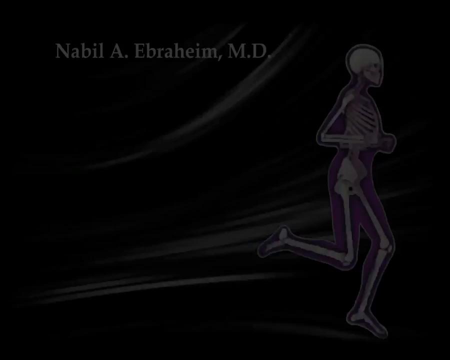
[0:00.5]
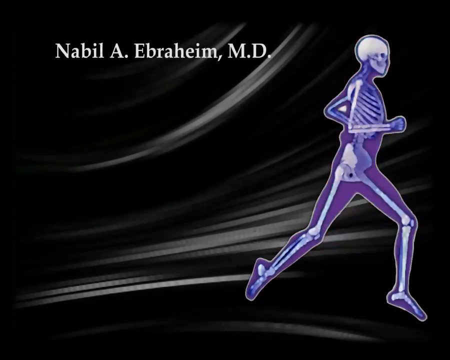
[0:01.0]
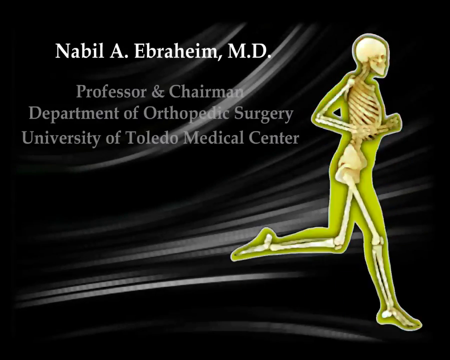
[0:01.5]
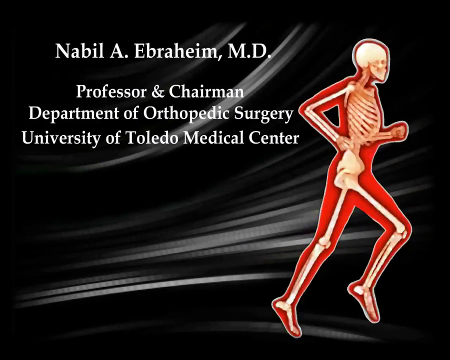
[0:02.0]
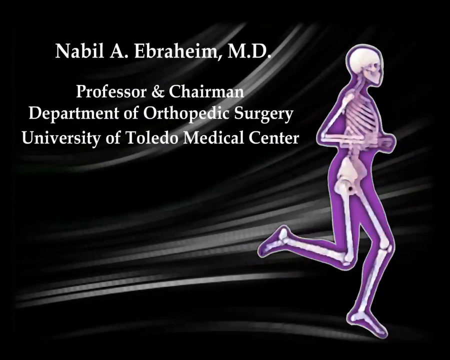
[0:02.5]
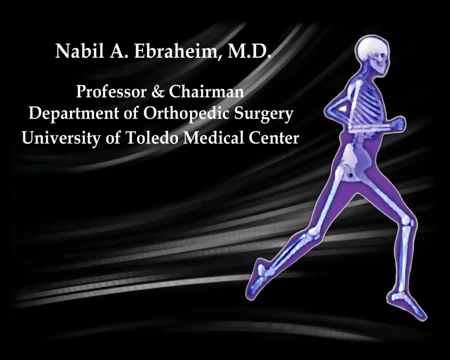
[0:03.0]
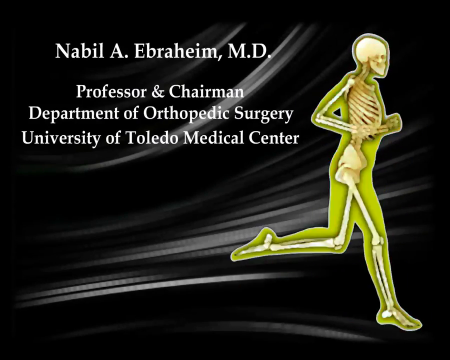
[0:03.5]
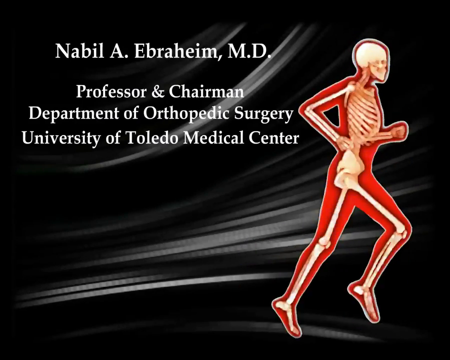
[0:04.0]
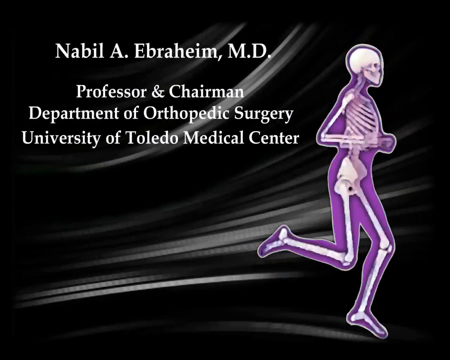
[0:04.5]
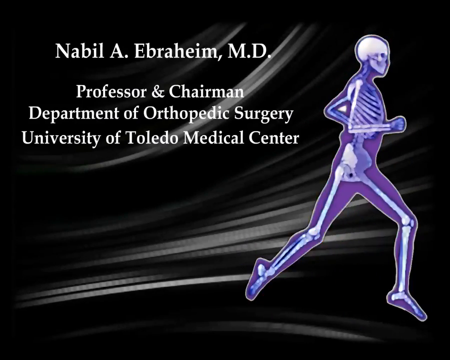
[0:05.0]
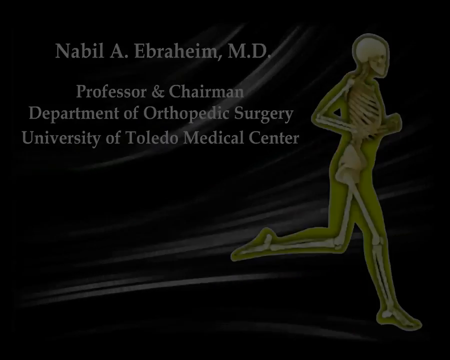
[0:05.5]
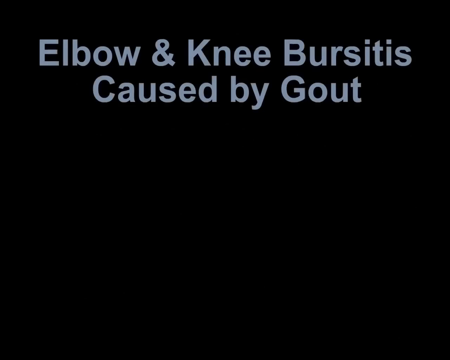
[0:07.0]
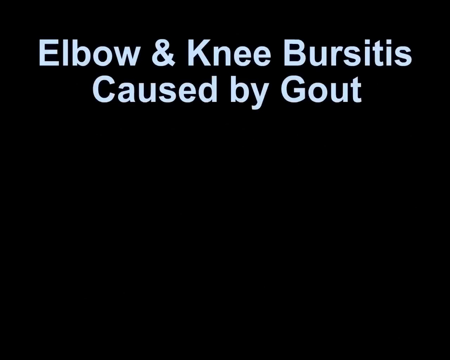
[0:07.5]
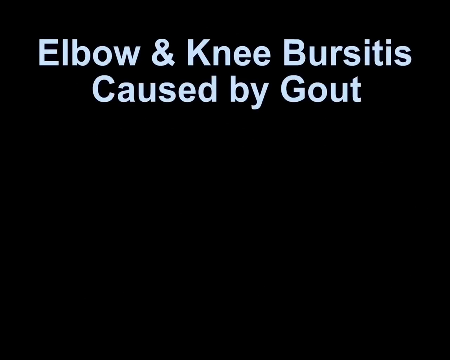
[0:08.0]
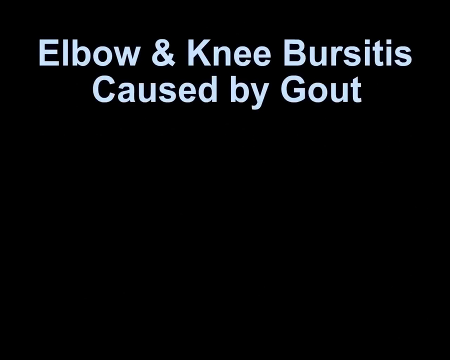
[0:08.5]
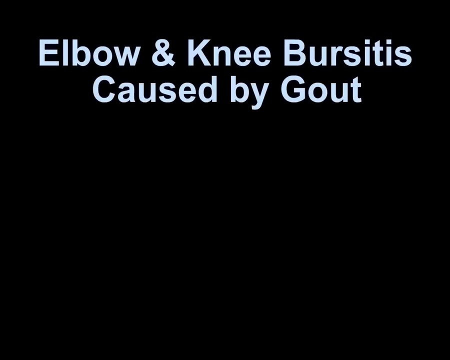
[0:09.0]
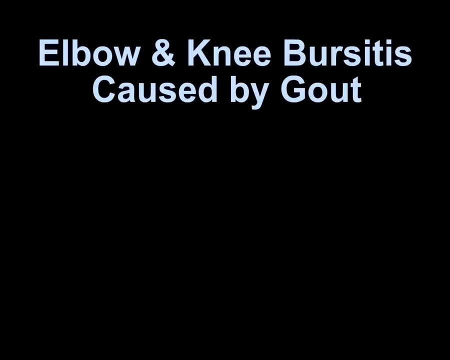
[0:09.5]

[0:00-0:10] The video opens on a black background with white and silver streaks on it. A skeleton appears running, flashing rainbow colors. To the left of the running skeleton, white writing reads "Nabil A Ebraheim MD professor and chairman department of orthopedic surgery University of Toledo medical". The scene then transitions to a new slide that reads "elbow and knee bursitis caused by gout". The screen is still black and the running skeleton is in white. The title then zooms away.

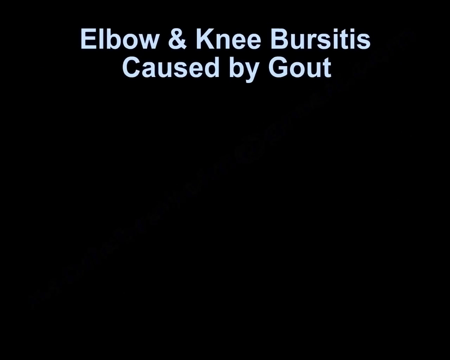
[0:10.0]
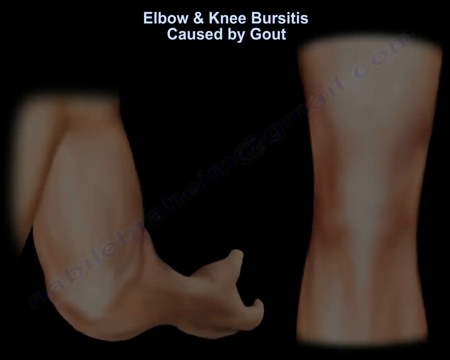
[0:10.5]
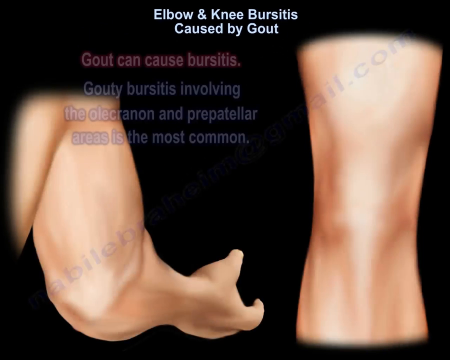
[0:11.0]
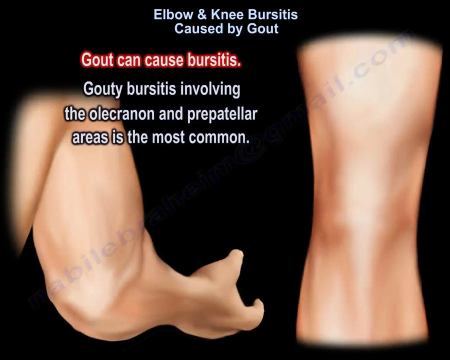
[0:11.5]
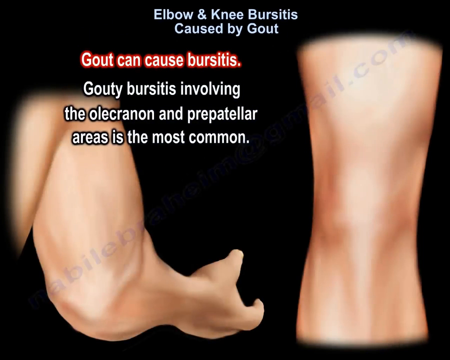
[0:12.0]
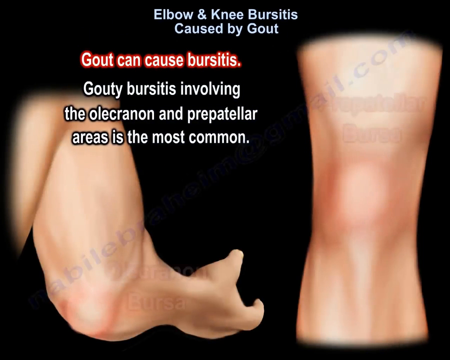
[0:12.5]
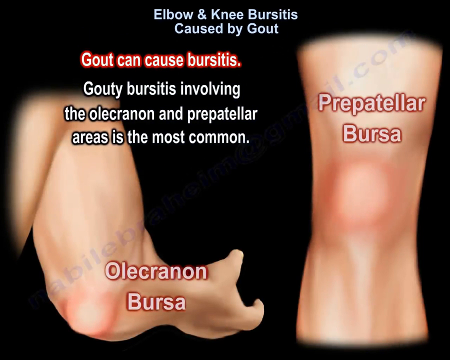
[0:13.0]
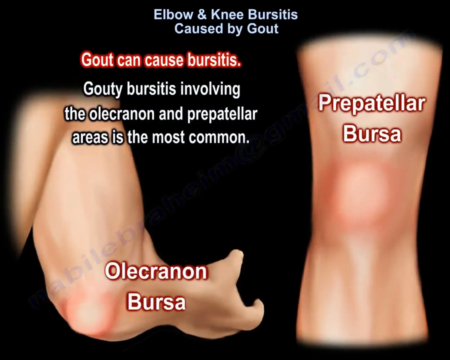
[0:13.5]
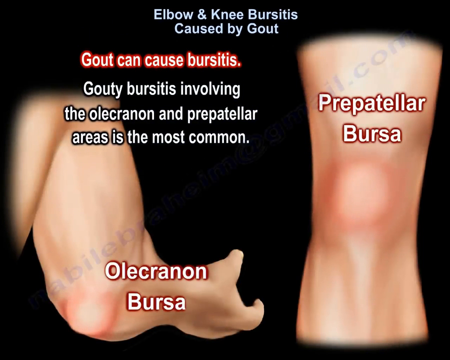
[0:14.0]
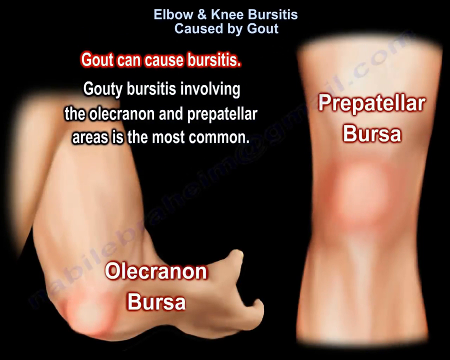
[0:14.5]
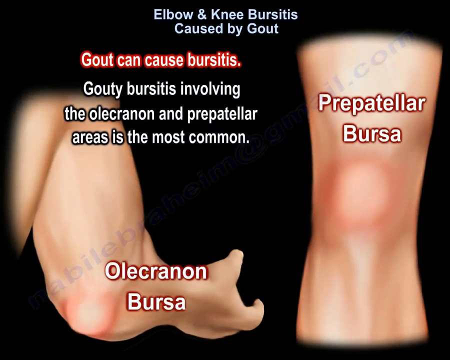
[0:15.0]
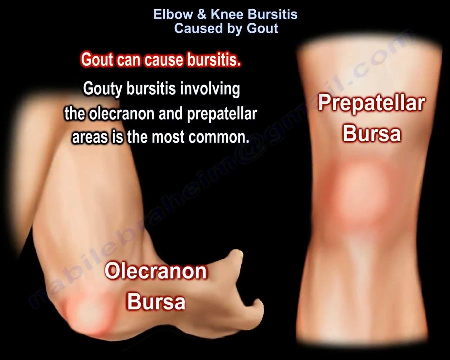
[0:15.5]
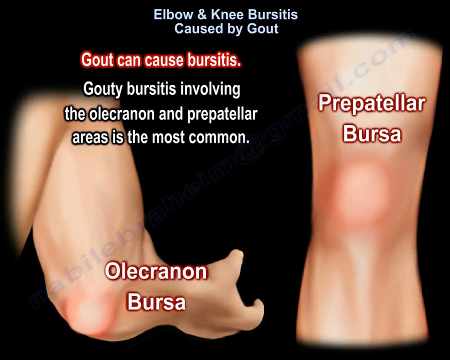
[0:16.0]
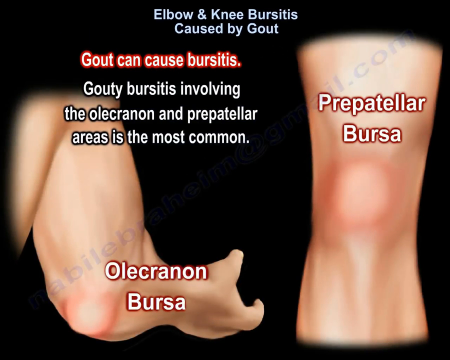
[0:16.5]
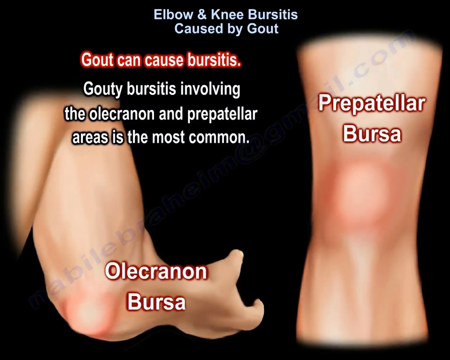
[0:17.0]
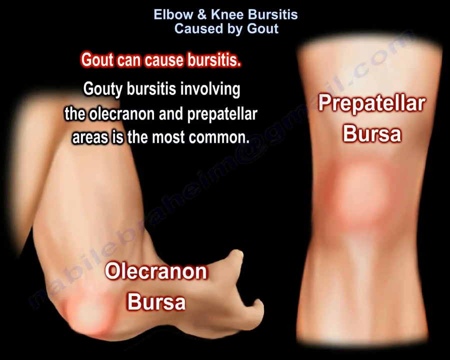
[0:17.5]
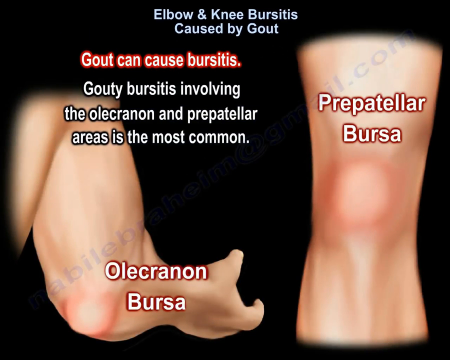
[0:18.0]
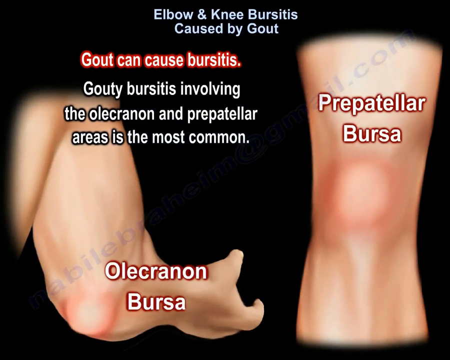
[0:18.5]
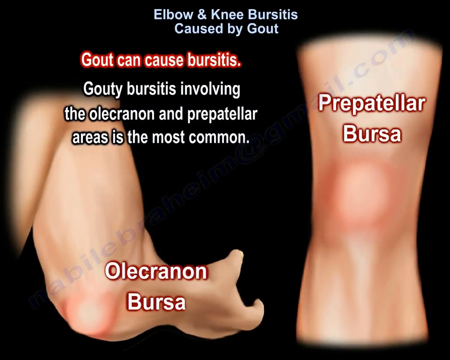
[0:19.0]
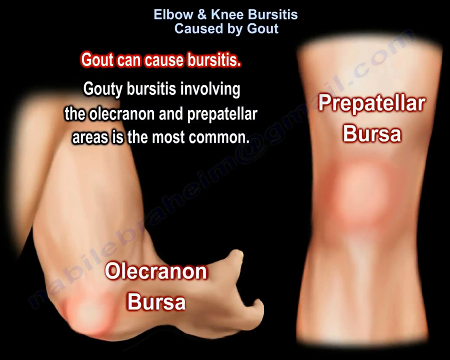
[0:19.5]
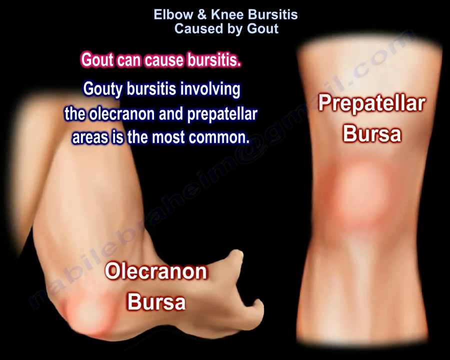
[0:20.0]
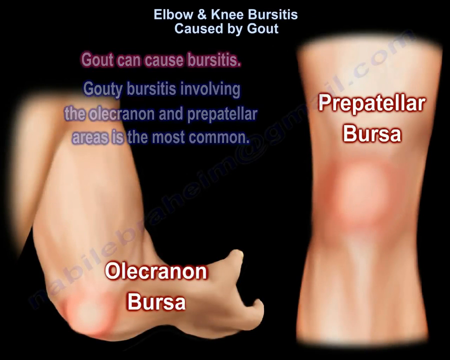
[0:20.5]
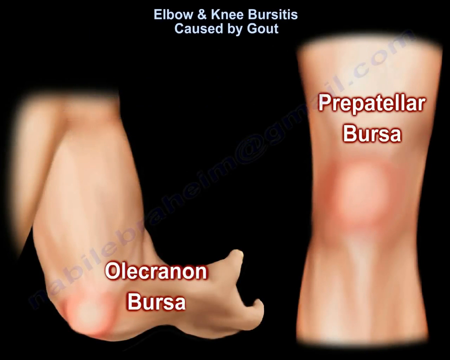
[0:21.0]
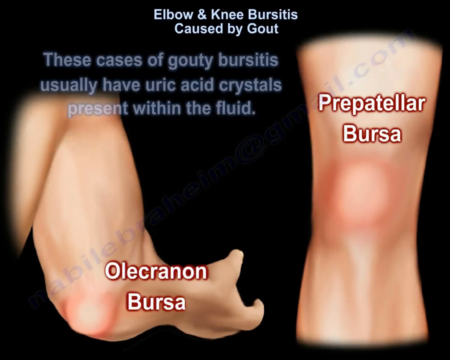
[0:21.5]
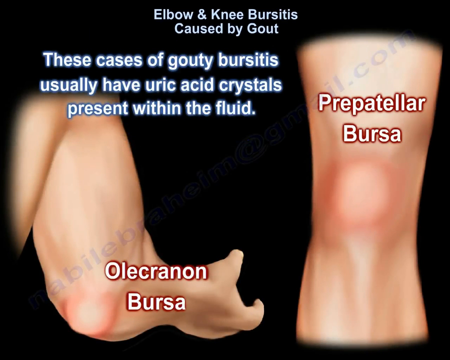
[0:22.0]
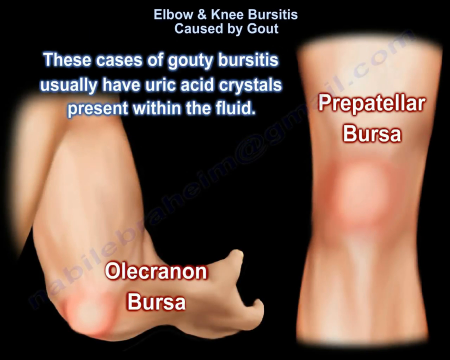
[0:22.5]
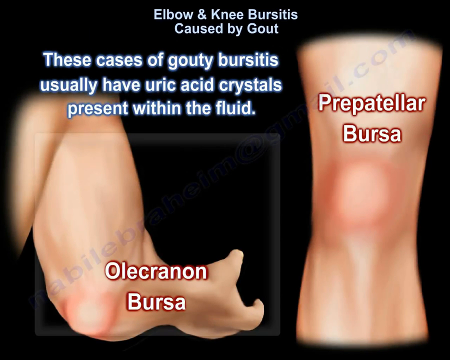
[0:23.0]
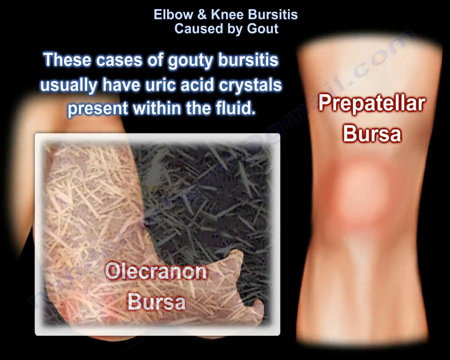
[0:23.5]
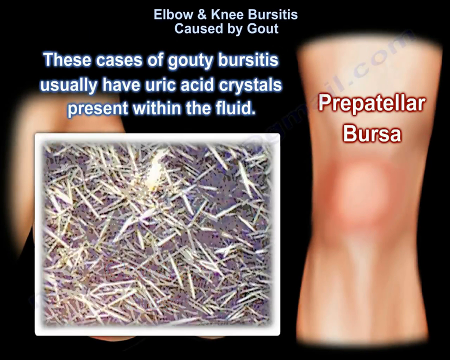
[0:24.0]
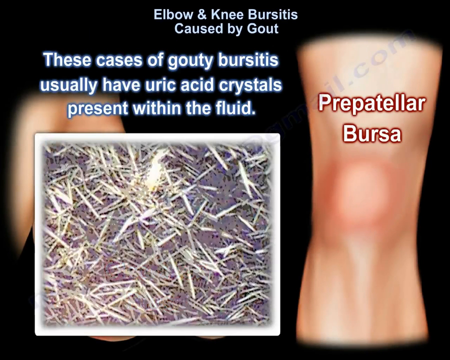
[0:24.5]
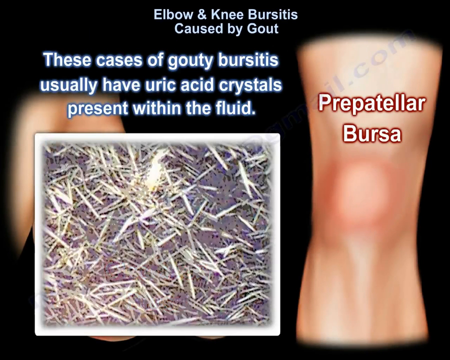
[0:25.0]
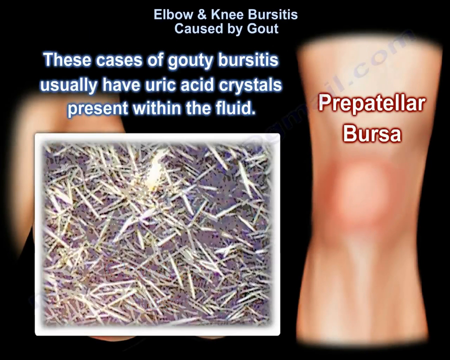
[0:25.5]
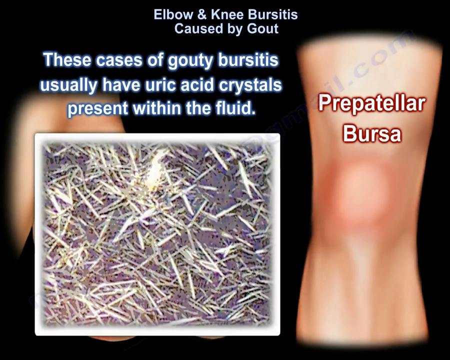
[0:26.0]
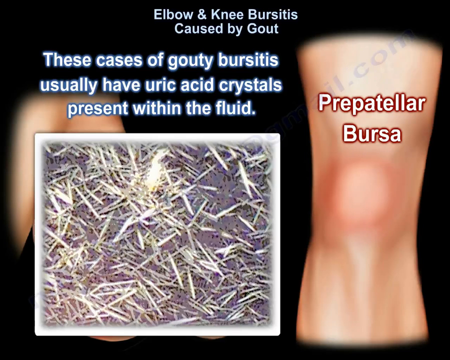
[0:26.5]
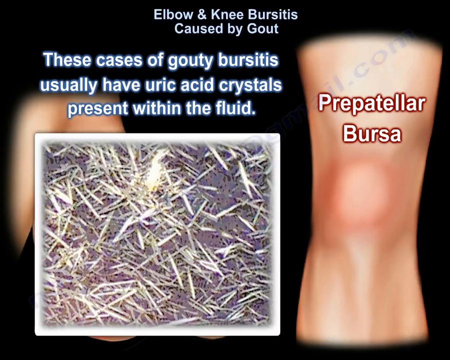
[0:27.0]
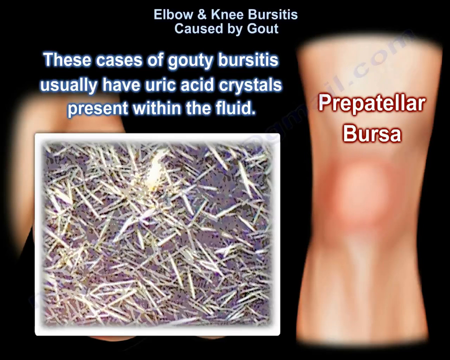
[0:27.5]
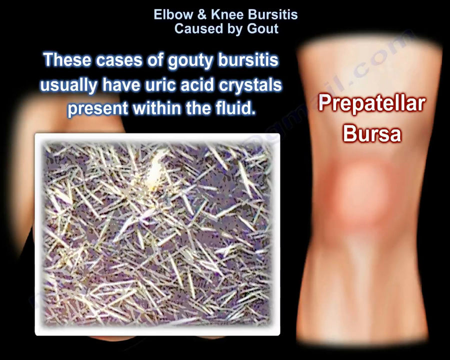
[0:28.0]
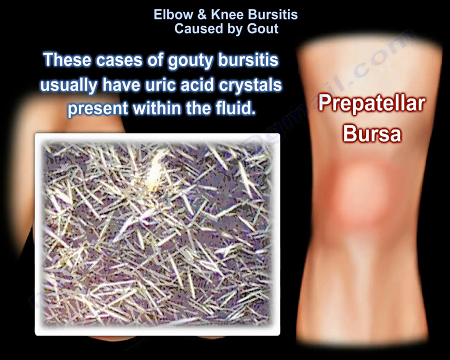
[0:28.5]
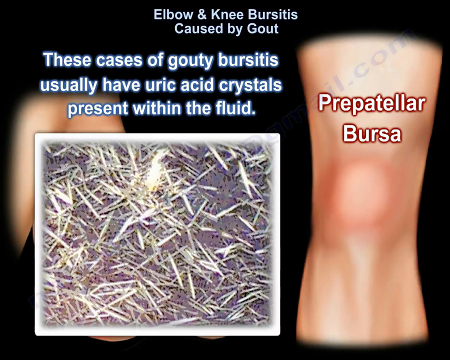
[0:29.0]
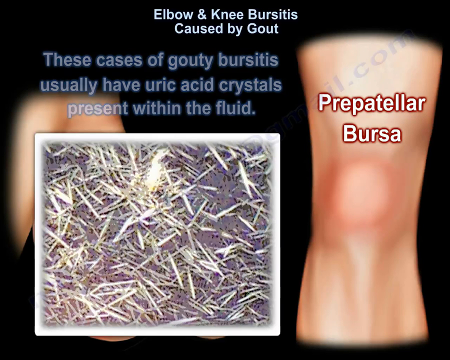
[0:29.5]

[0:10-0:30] A black screen shows the title "elbow and knee bursitis caused by gout" in white font. It transitions to two images as the title gets smaller; the images show what looks like an arm and maybe a knee. Text reads "gout can cause bursitis", underlined in red, and underneath it reads "gouty bursitis involving the olecranon and prepatellar areas is the most common". The elbow is labeled "olecranon bursa" and the knee "prepatellar bursa"; these labels are white with a red outline. The view then transitions to a different slide that reads "these cases of gouty bursitis usually have uric acid crystals present within the fluid", and it shows imagery of what those crystals apparently look like in the fluid.